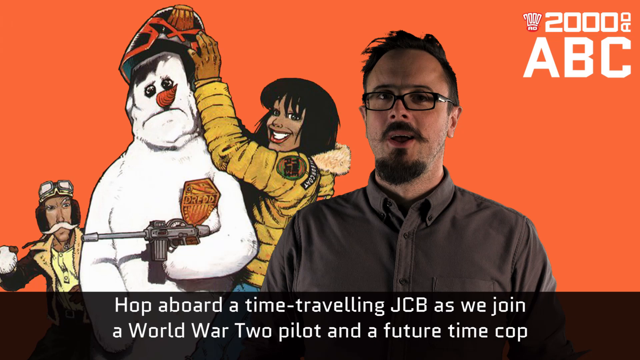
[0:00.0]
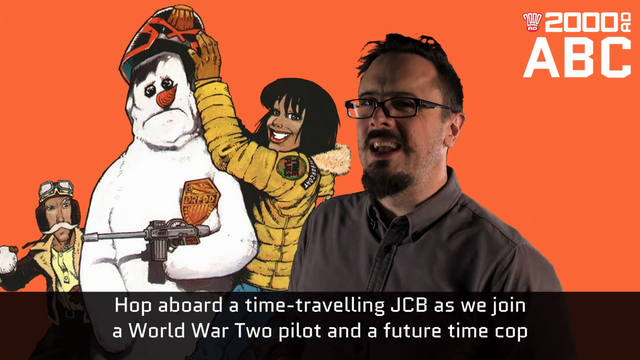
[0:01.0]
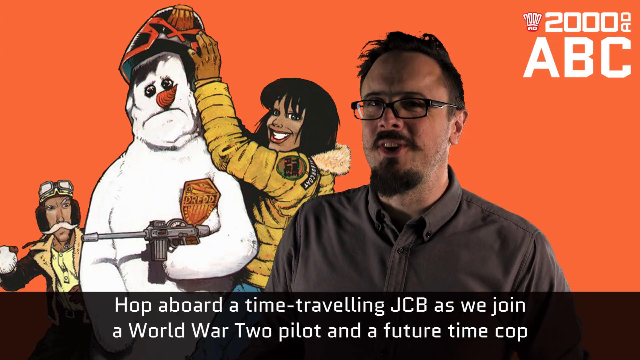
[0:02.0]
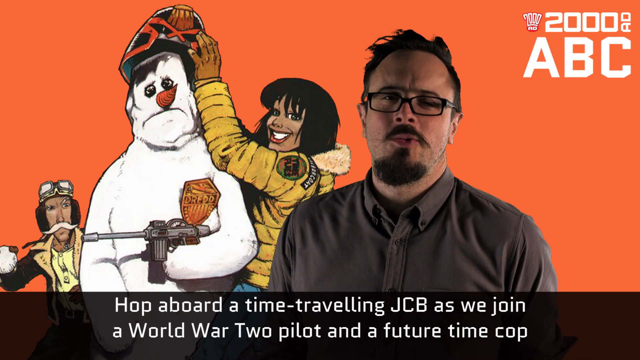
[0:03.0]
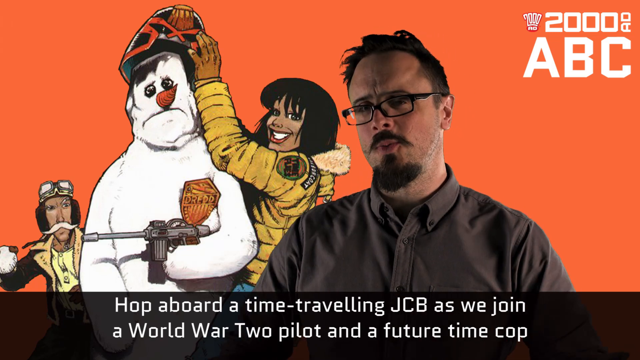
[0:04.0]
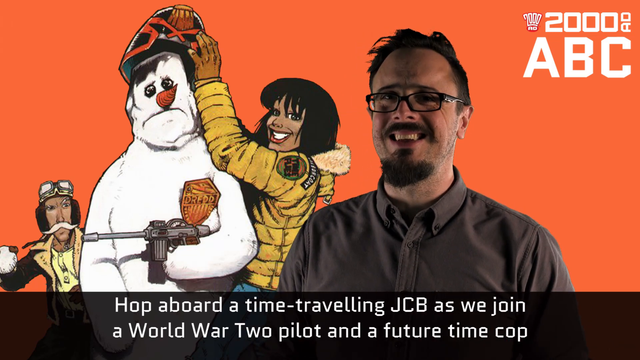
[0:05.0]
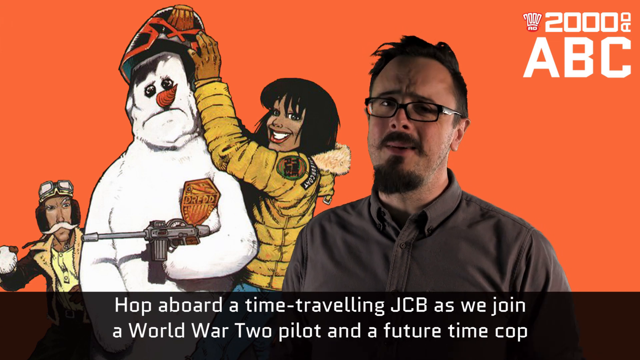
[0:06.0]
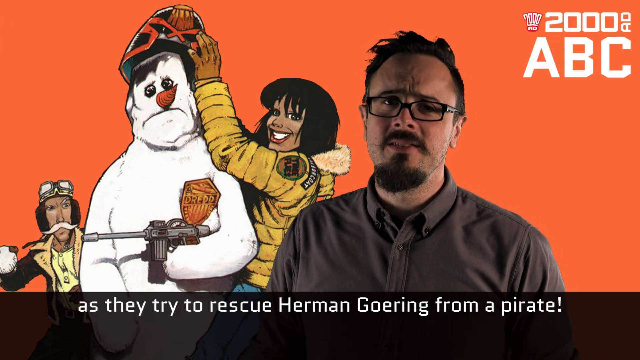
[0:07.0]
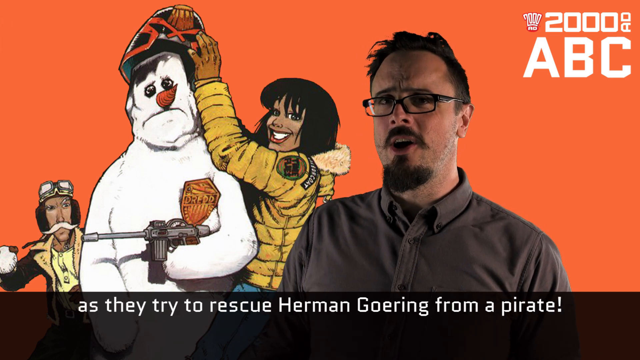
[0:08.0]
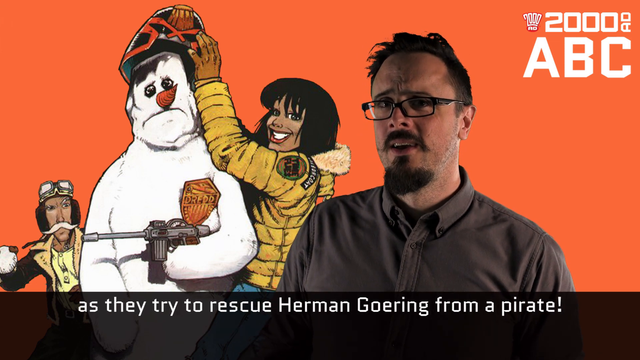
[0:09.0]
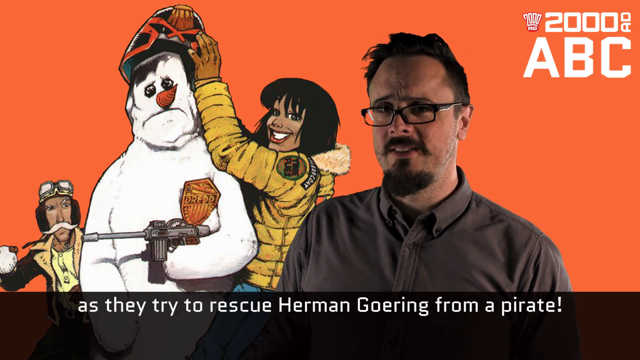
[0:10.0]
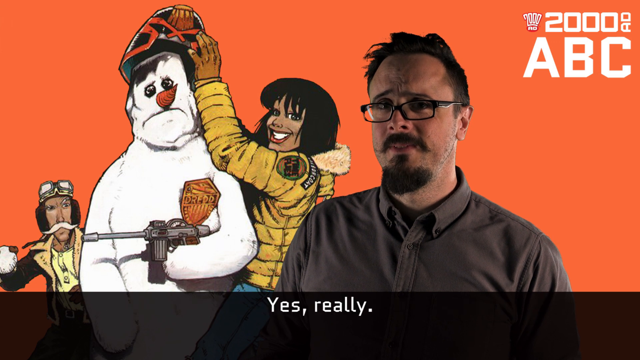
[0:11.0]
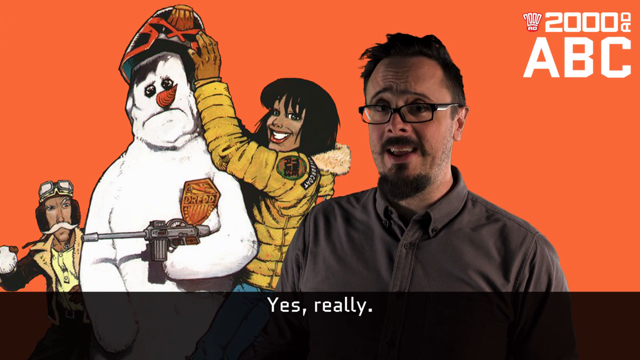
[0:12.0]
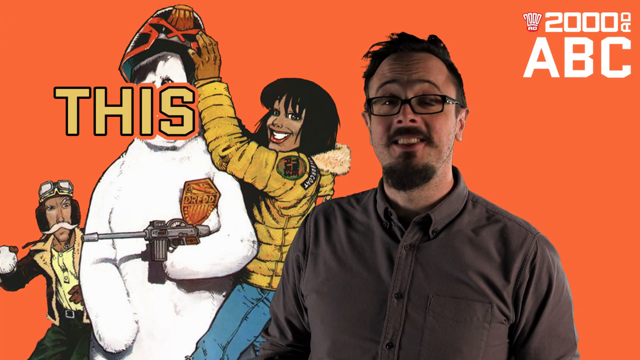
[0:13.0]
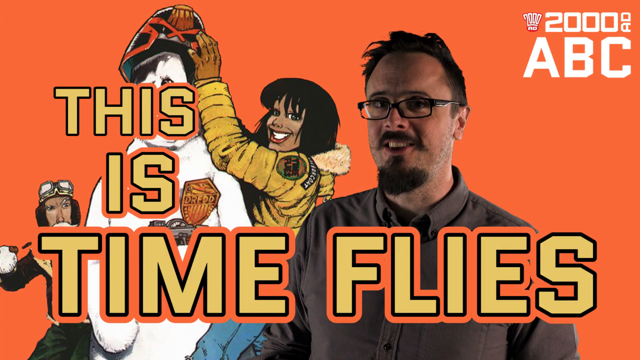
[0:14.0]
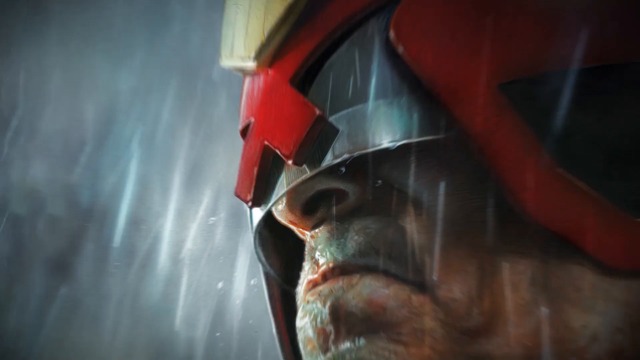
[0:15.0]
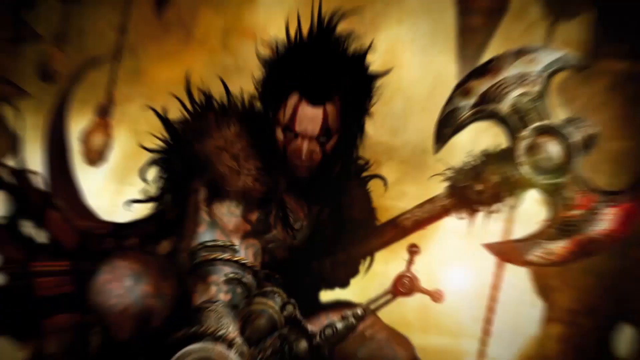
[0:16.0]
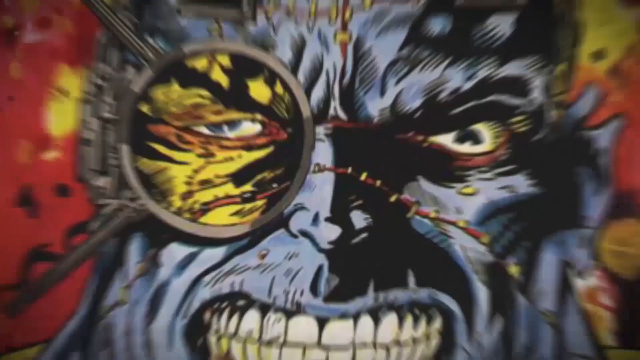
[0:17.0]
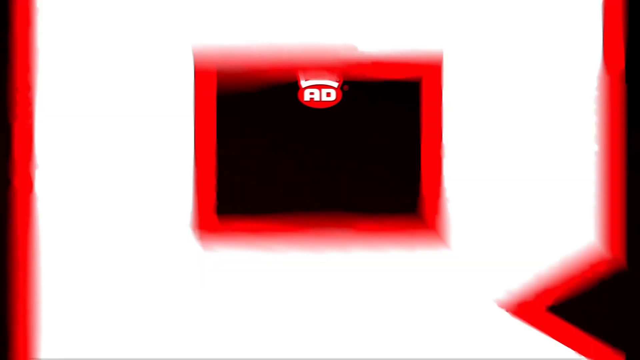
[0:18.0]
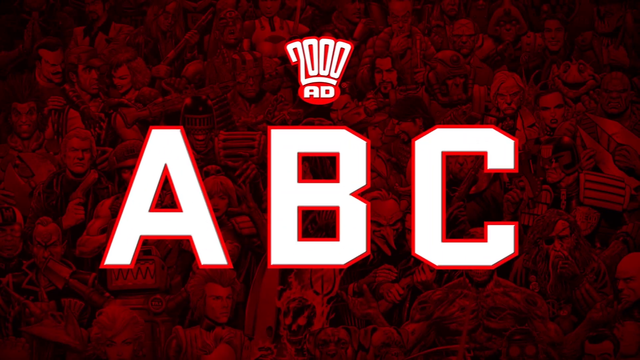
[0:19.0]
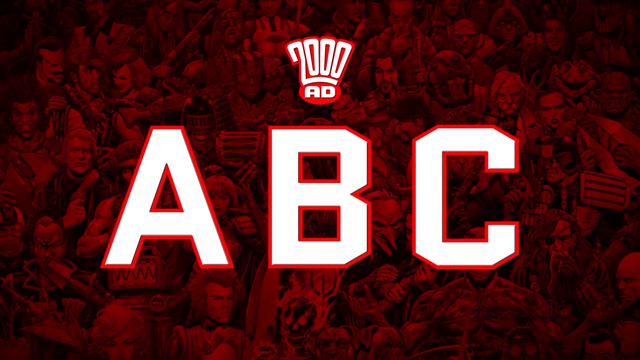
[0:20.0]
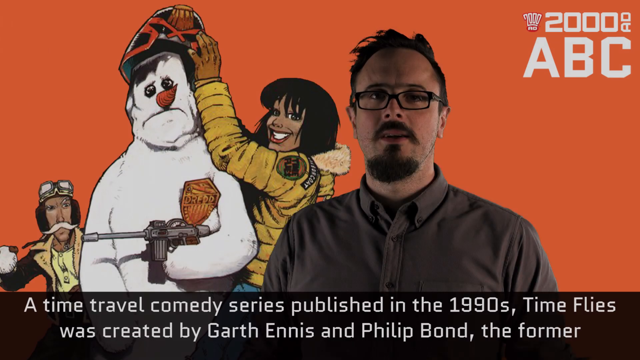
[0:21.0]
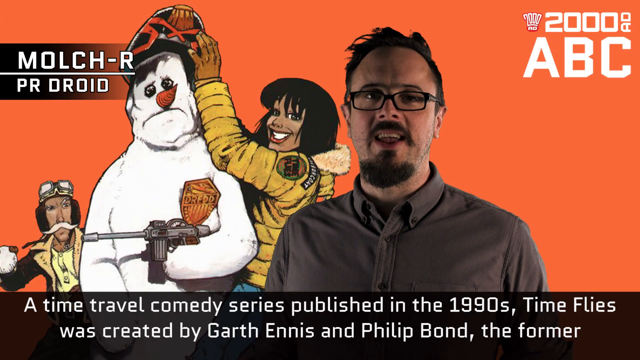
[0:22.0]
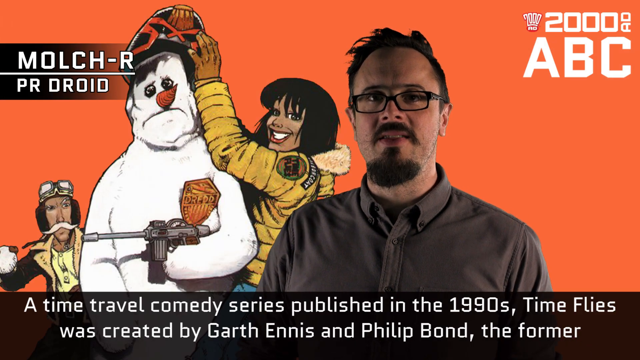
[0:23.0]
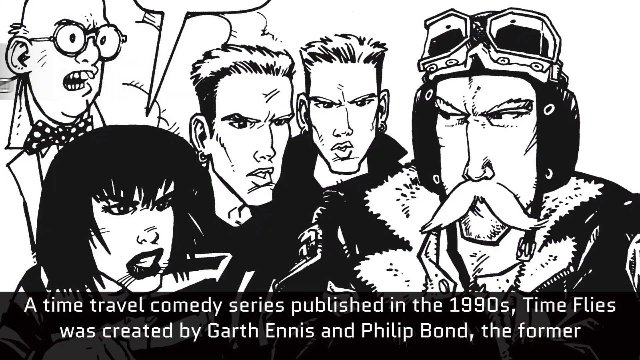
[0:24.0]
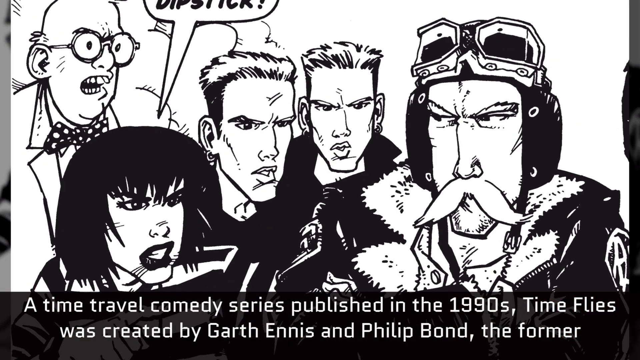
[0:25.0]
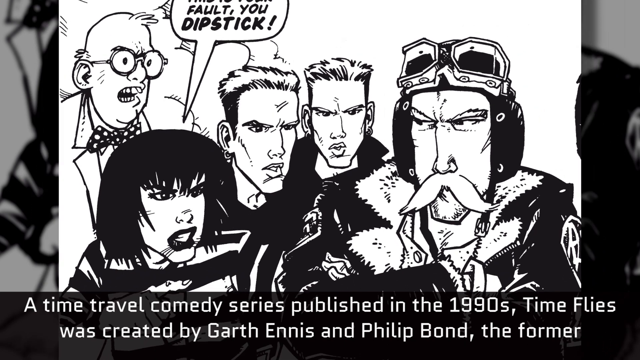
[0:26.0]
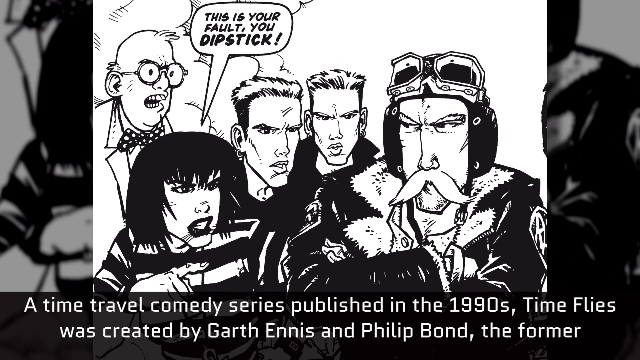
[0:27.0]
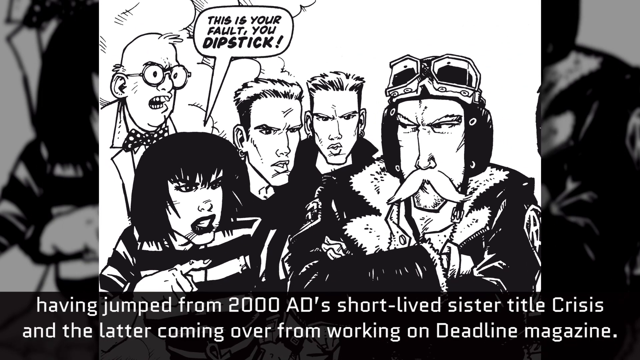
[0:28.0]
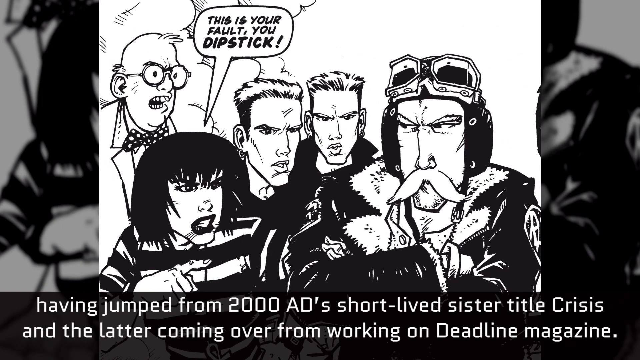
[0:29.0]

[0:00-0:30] A man stands talking to the camera. Behind him is an orange background with a cartoon drawing of a woman putting what looks to be a helmet on a snowman. The snowman wears a Judge Dredd badge and holds an old-fashioned tommy gun, and to the left of him is a pilot with a white moustache and pilot goggles on his head. The man has short, dark hair, rectangle glasses, a beard, a moustache and a goatee, and wears a grey shirt. Text at the bottom reads "Hop aboard a time-travelling JCB as we join a World War II pilot and a future time cop." He keeps talking to the camera, apparently explaining what is going to happen. The text then reads "As they try to rescue Hermann Göran from a pirate." In the top right corner are the words "2000 AD", and underneath the big white letters it says "ABC". The man continues talking, and the text says "Yes, really." Then "Time Flies" appears in big words across the screen. The video cuts to cartoons of Judge Dredd, with "ABC" and "2000 AD" at the top and drawings of various cartoon characters in the background. The man returns to talk to the audience, and the text at the bottom says "A time travel comedy series published in the 1990s, Time Flies was created by Garth Ennis and Philip Bond." The video cuts to a black and white drawing of what appears to be the band Bross, with a pilot to their right and a woman to their left. The view pans out to show a professor wearing a bow tie with white dots, saying "this is your fault you dipstick".